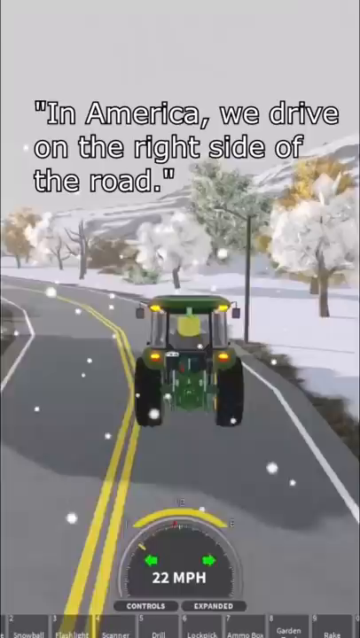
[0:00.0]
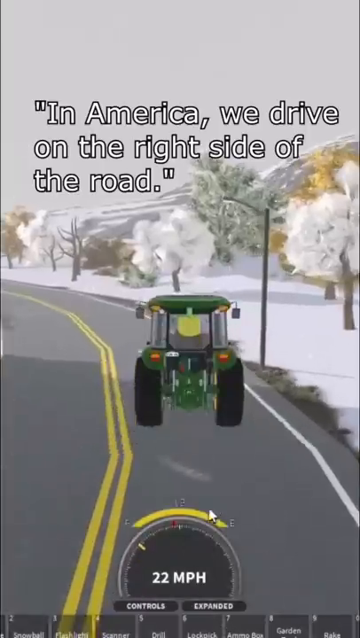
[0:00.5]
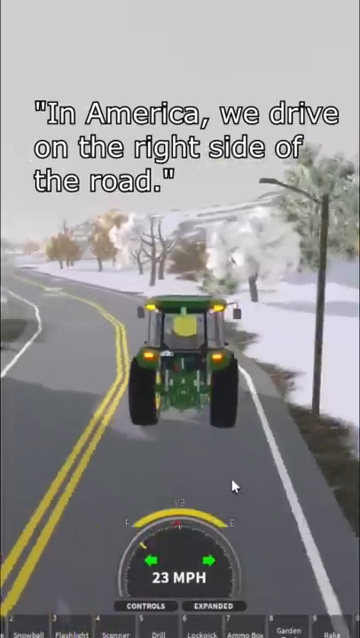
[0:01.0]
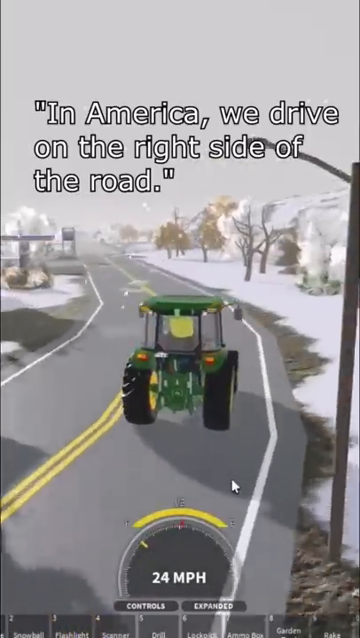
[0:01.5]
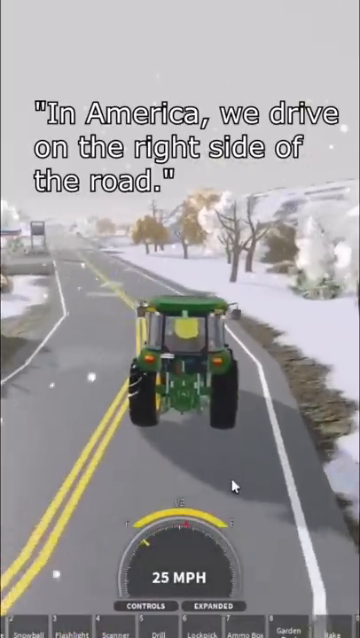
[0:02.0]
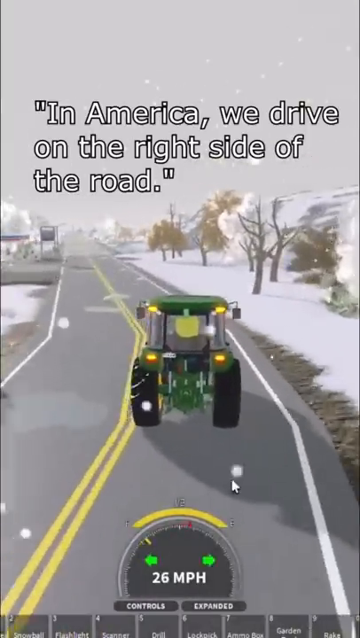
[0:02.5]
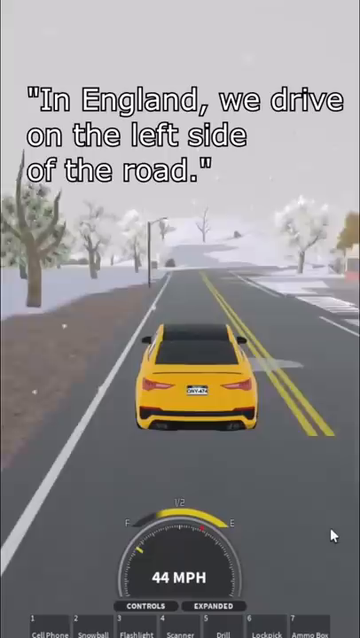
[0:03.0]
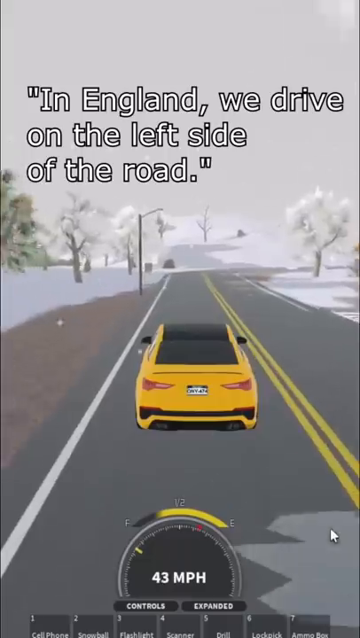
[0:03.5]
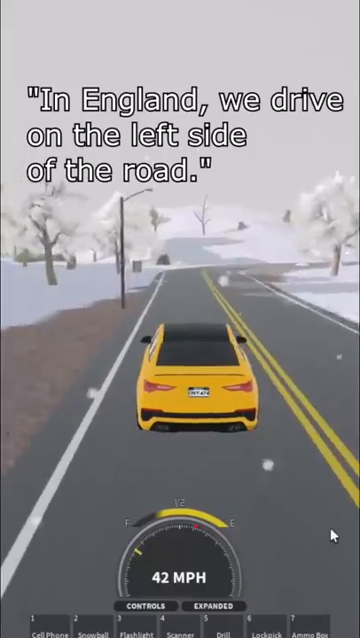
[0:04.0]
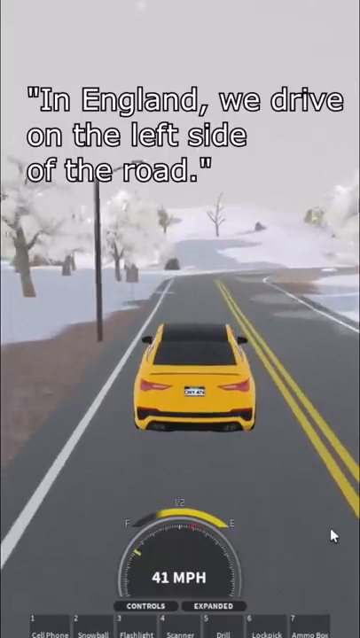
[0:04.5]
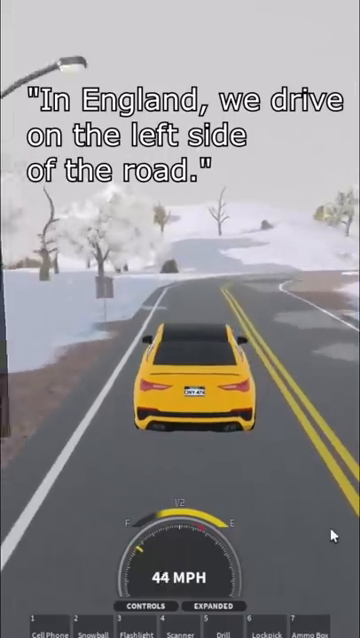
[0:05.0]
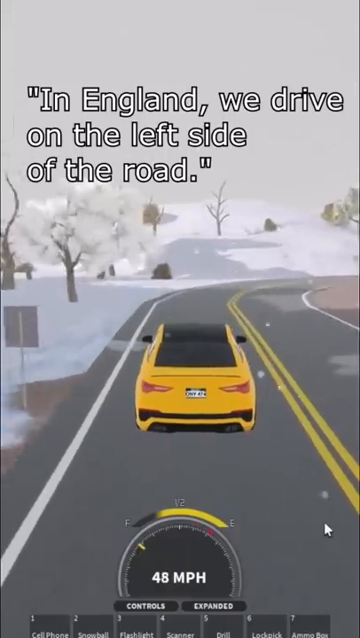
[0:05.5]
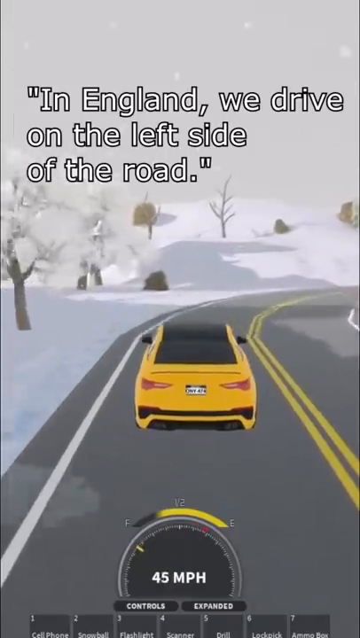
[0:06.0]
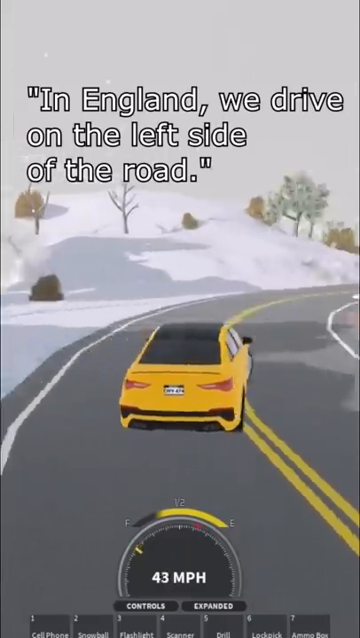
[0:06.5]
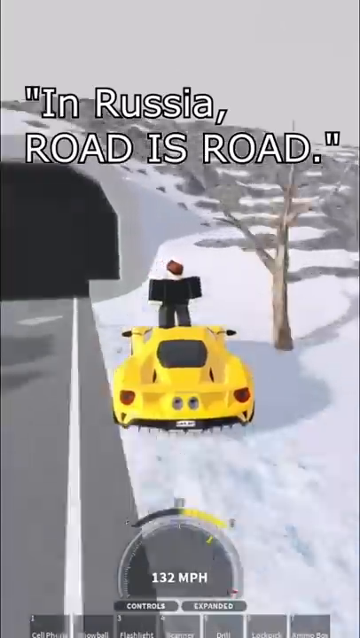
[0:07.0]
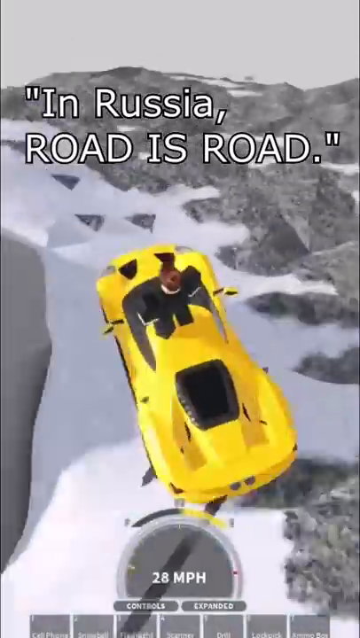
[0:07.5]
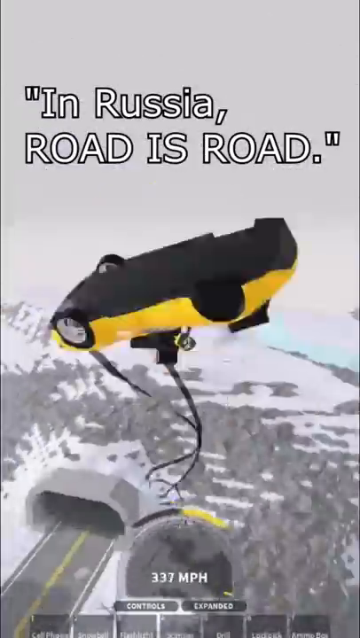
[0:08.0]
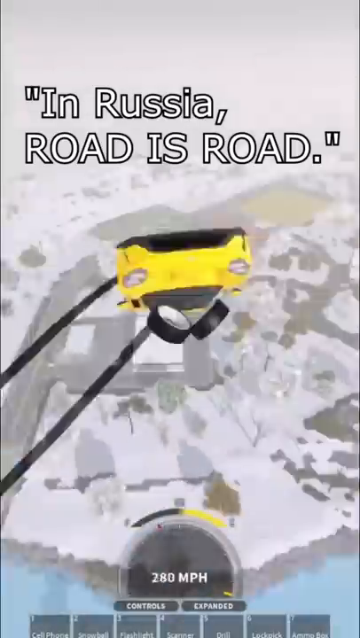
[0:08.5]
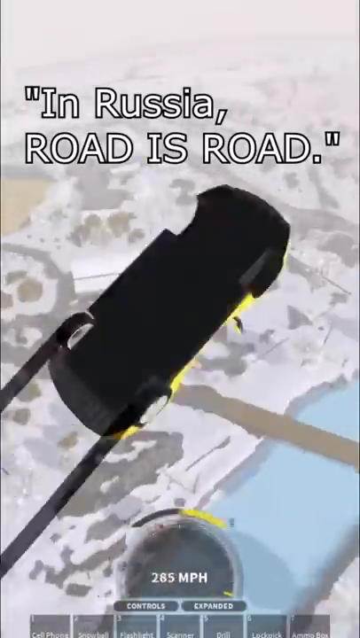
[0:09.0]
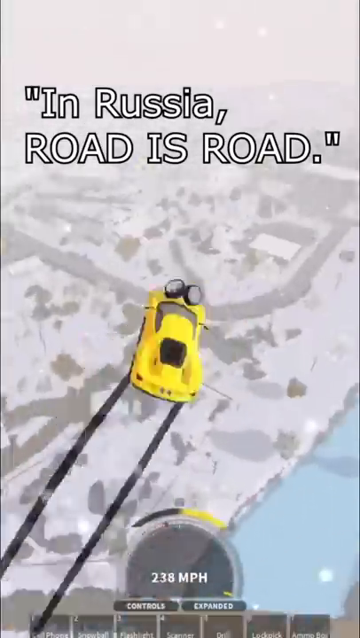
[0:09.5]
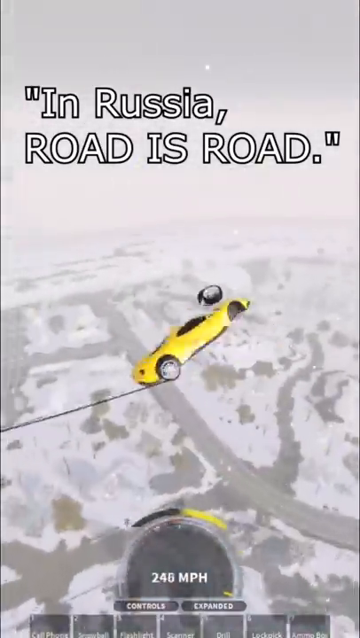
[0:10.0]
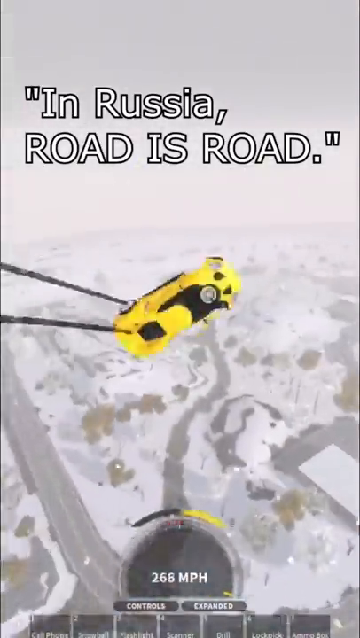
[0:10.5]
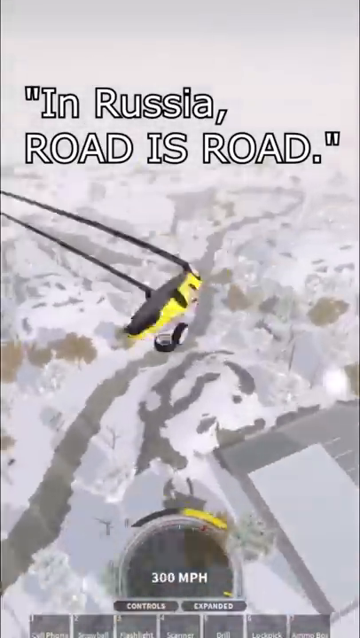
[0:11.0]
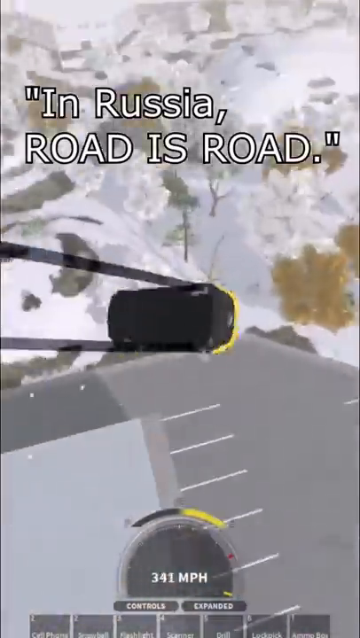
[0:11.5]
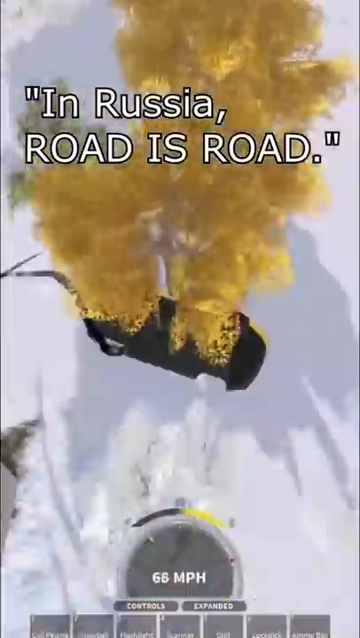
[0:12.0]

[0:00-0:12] A green tractor drives down a road in the snow. The footage is animated and not very realistic, and the tractor has some lights on. There appears to be a gas station. The view cuts to a yellow car, possibly a BMW, driving through a snowy area on a highway. It then cuts to a yellow sports car, possibly a Lotus, with a guy on top of it, and they go up an embankment next to a tunnel. A car goes flying off with what looks like rubber bands attached to it, a wheel comes off, and text reads "in Russia, road is road." It seems to be some sort of video game. The car spins and lands in a tree, and white trees are visible. A miles-per-hour indicator shows 27, then 43 as the view switches cars, then 100 and 300 when it goes to the car with the guy on top, which is out of control. Along the bottom are expanded controls listing a cell phone, snowball, flashlight, 4 scanner, 5 drill, 6 lockpick and 7 ammo box, apparently items that can be used, along with a fuel gauge.